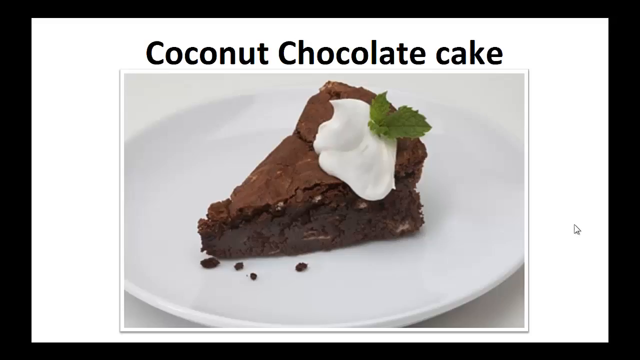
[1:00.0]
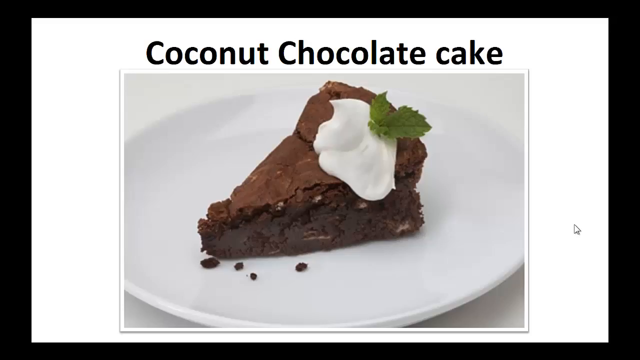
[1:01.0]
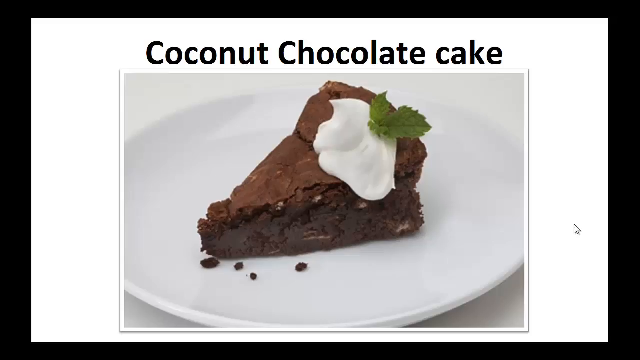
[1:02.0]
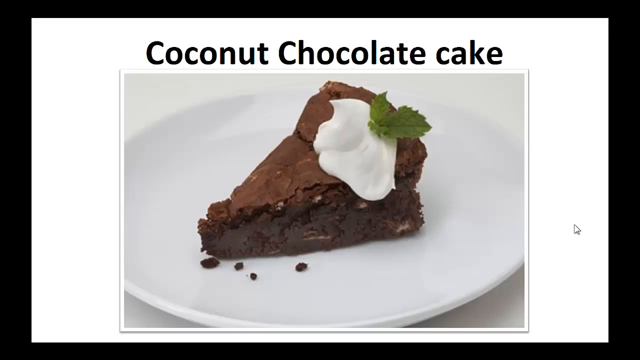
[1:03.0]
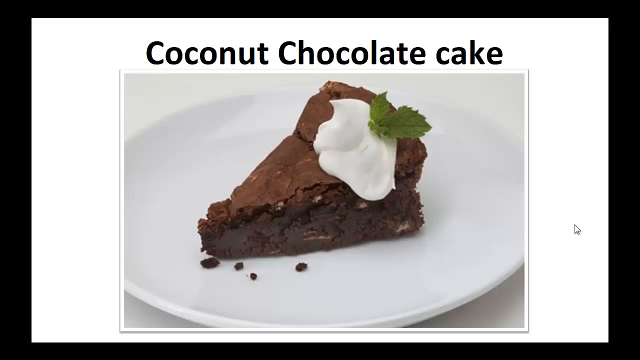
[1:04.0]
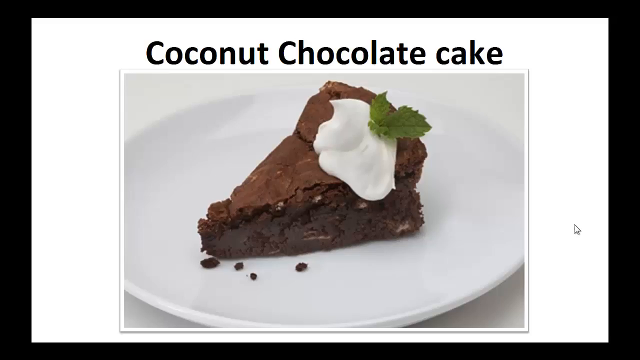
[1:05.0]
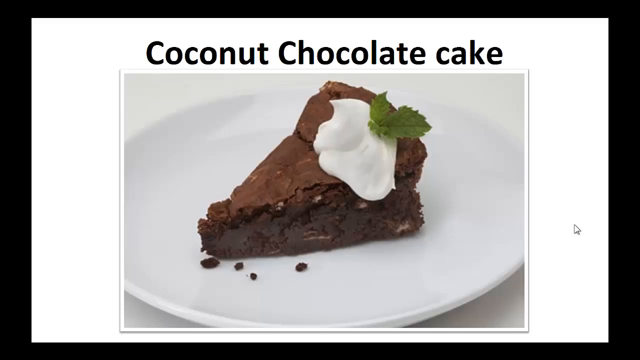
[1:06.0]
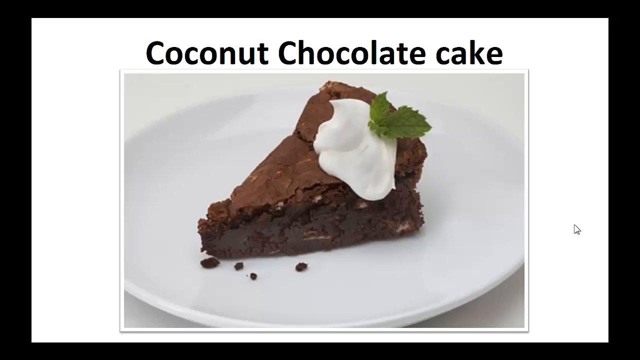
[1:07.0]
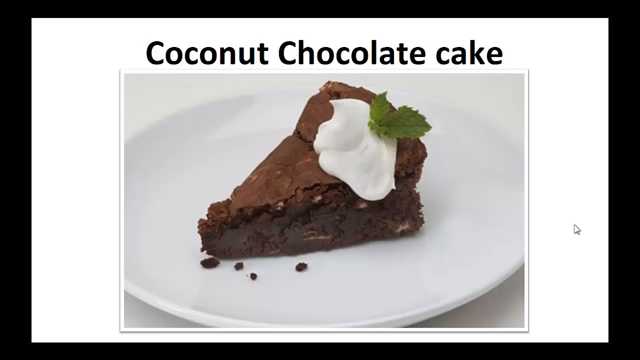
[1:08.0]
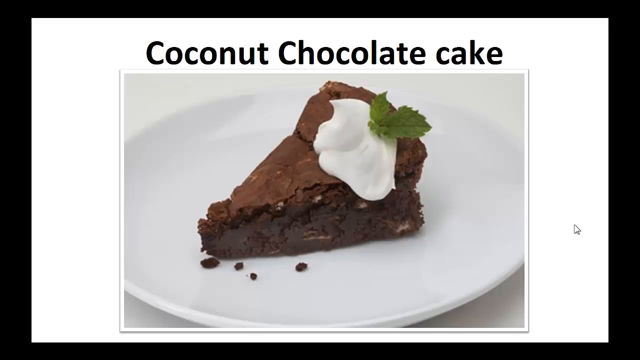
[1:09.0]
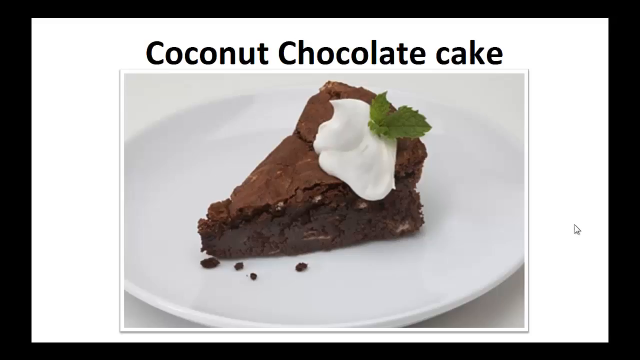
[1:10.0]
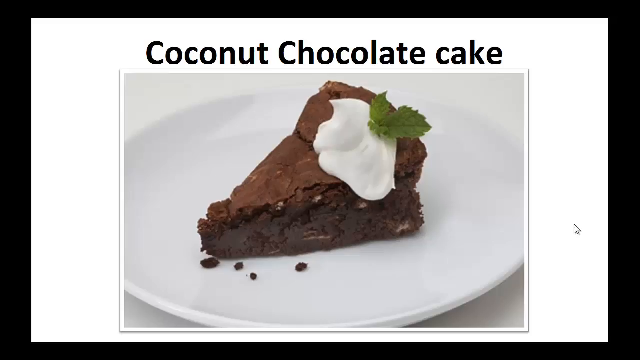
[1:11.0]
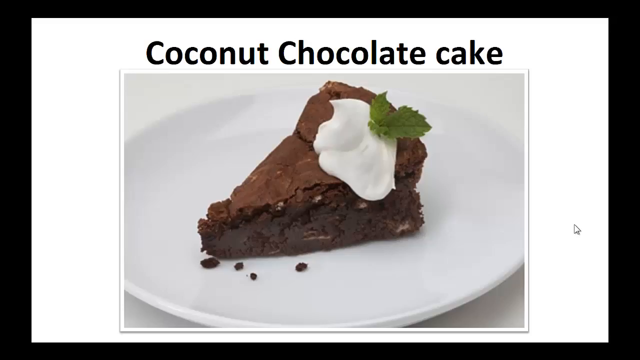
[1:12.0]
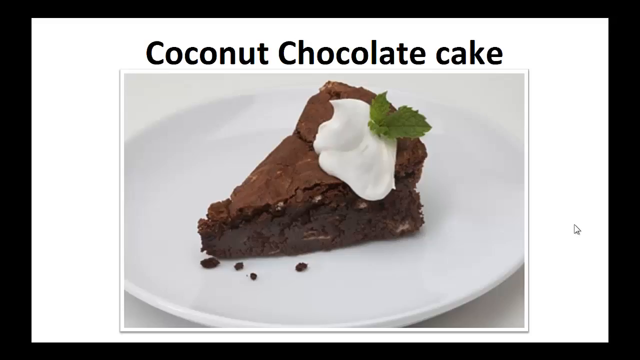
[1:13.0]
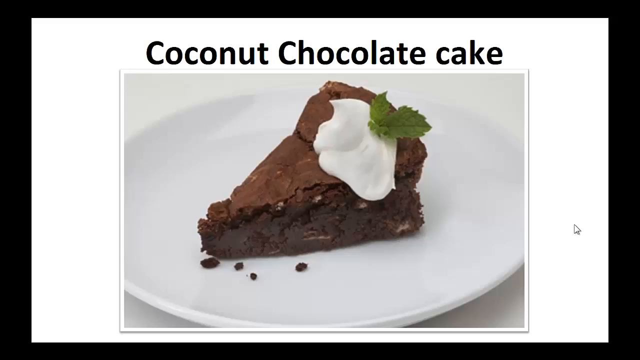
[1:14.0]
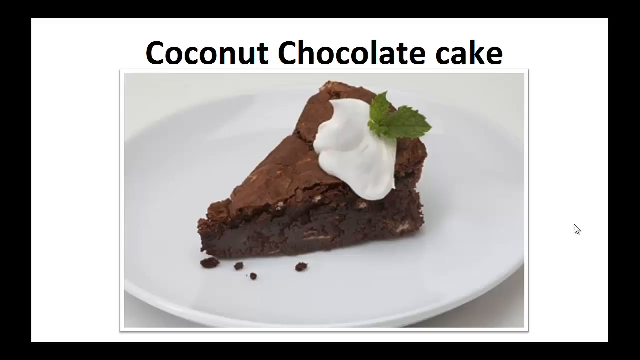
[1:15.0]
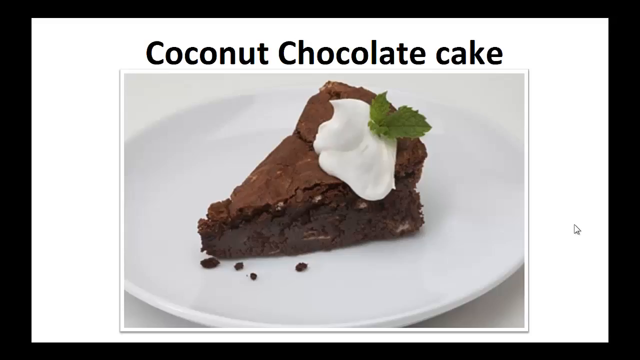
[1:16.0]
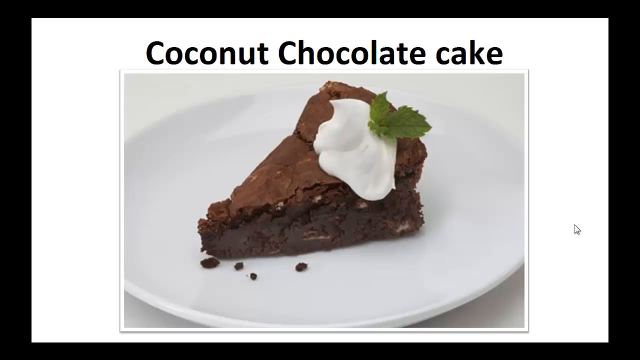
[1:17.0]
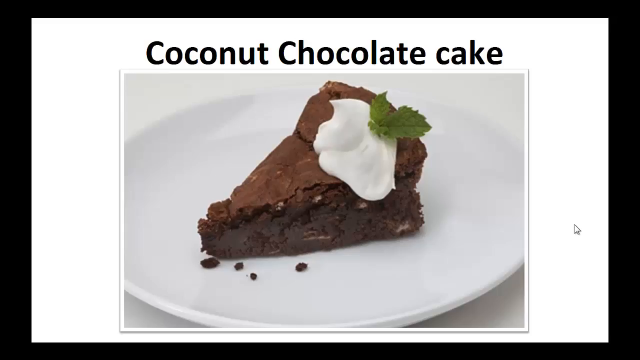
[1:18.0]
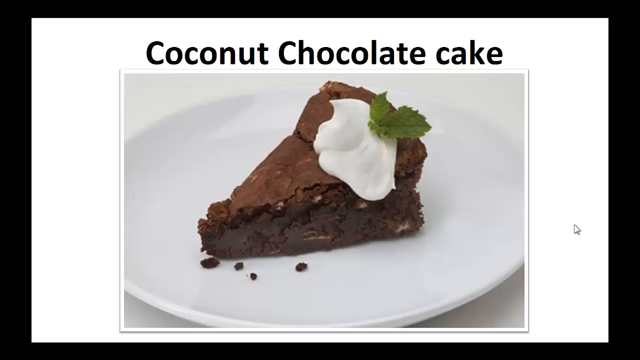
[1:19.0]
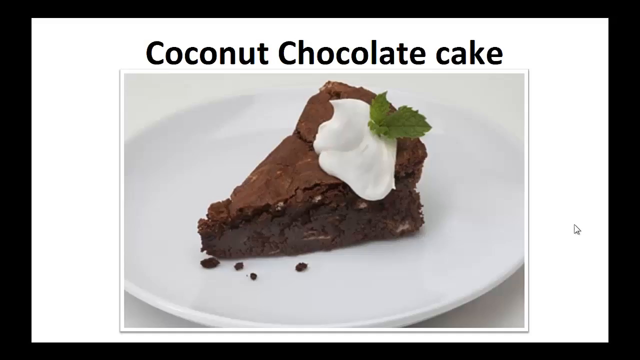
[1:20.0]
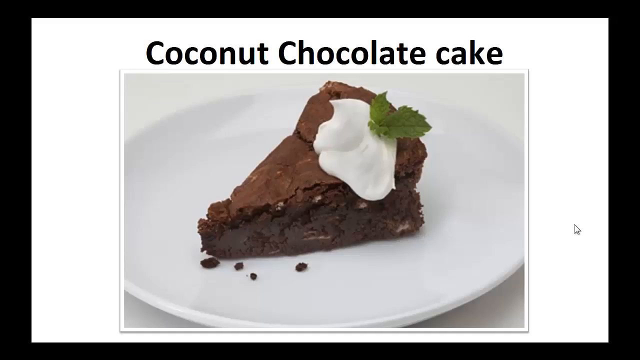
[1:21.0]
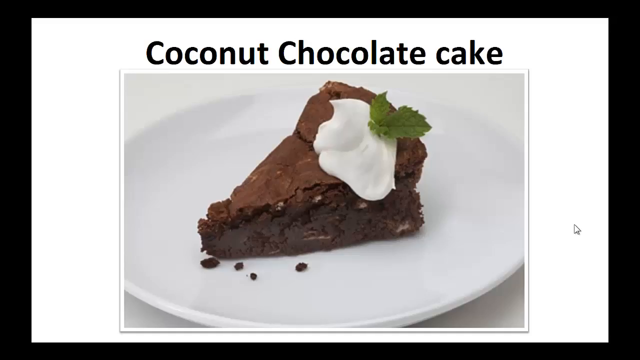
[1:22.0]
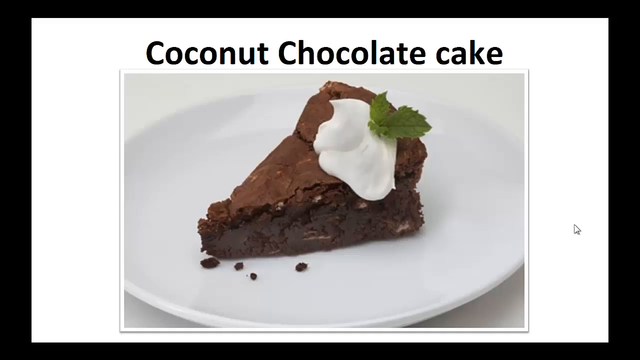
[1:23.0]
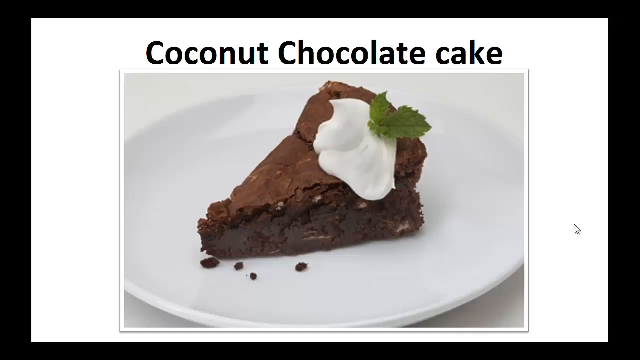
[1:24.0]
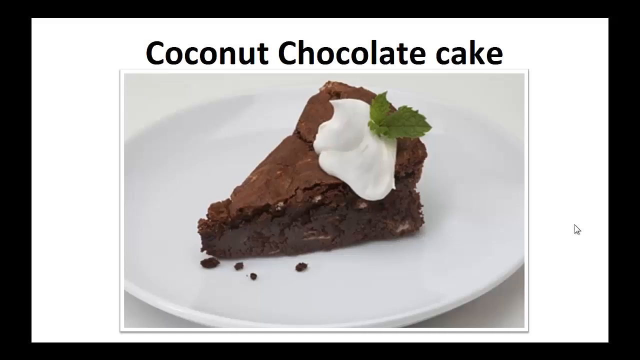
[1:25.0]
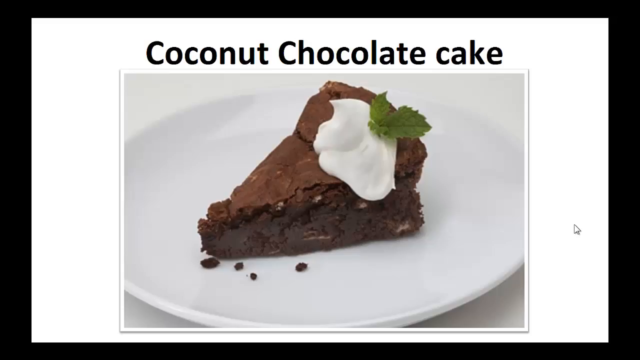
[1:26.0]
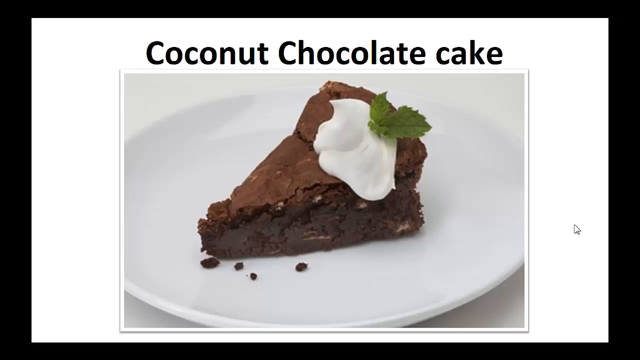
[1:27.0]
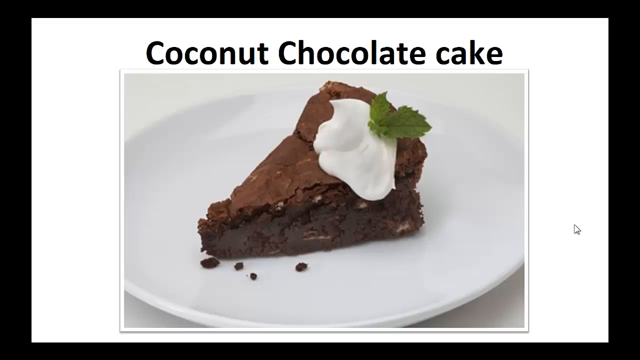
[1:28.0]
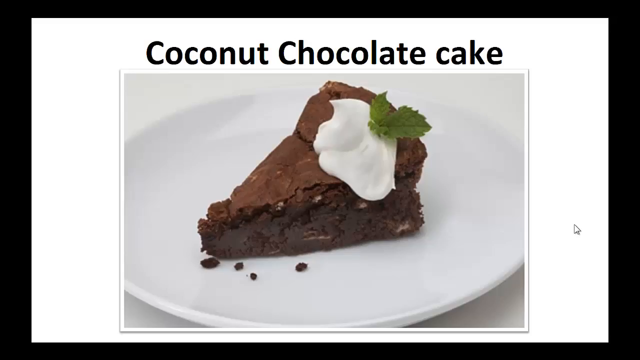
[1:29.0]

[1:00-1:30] The image looks like a cropped picture, apparently displayed on a laptop, as a small mouse-pointer arrow is visible on the right-hand side. The main subject is a brown cake topped with white cream and something that looks like leaves, apparently mint leaves. Above it, "coconut chocolate cake" is written in a big black font. The overall background is white, and the video stays in one position without changing.